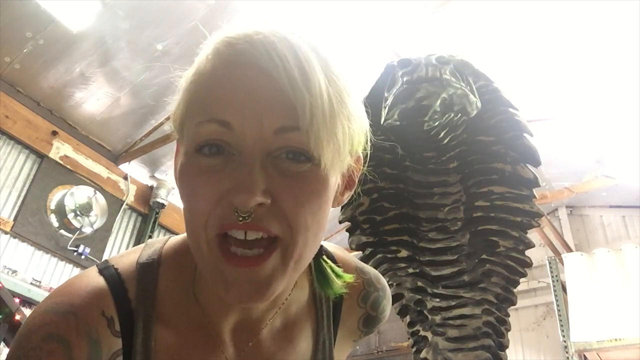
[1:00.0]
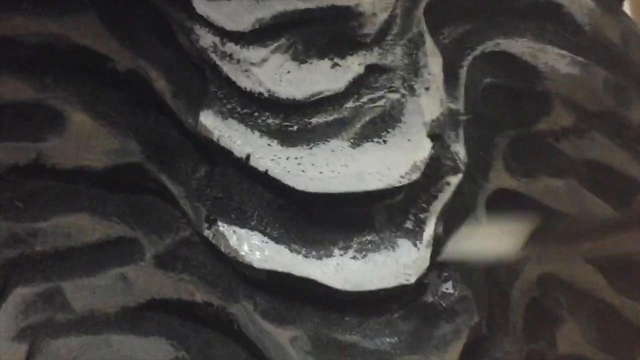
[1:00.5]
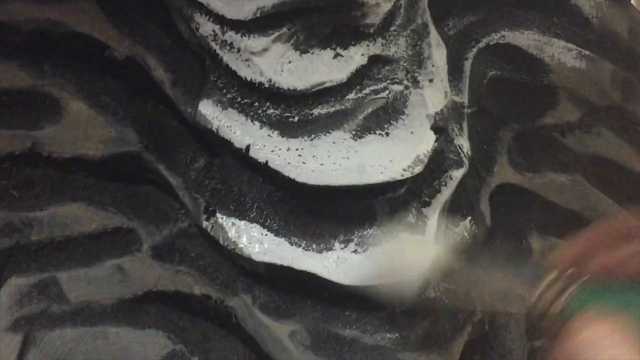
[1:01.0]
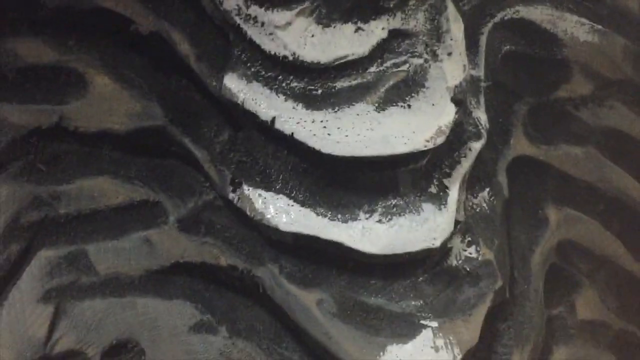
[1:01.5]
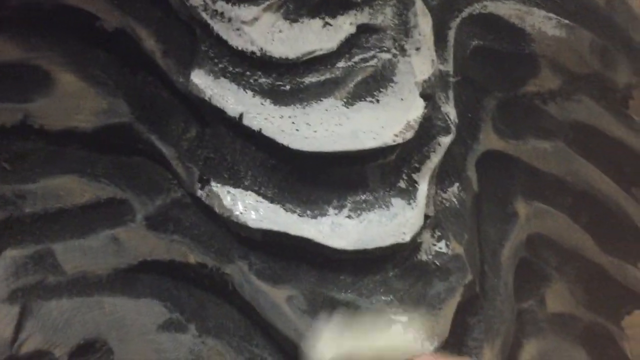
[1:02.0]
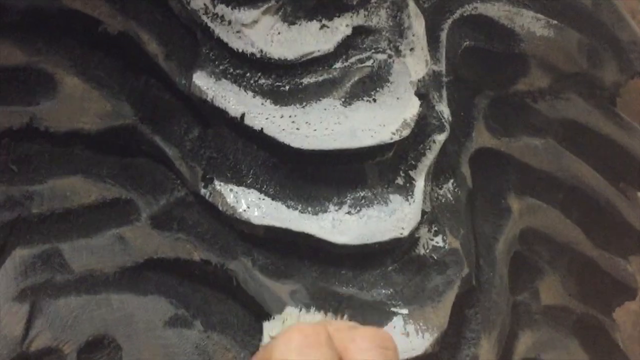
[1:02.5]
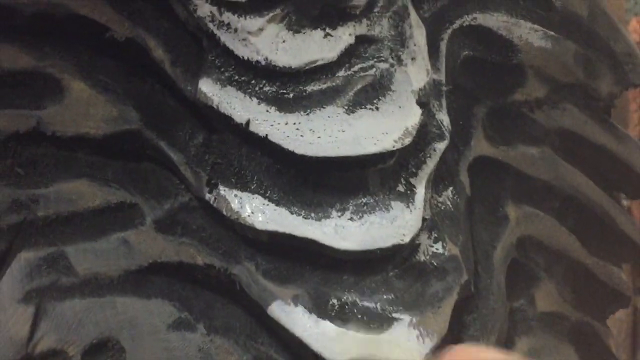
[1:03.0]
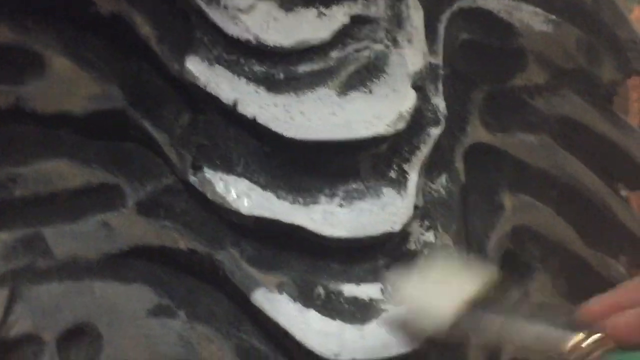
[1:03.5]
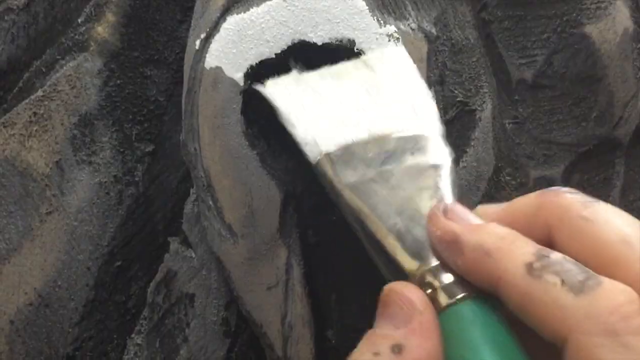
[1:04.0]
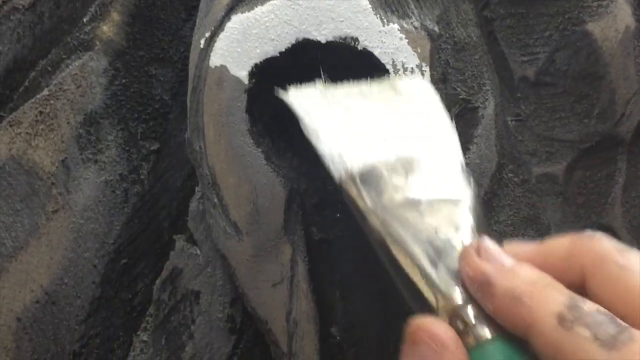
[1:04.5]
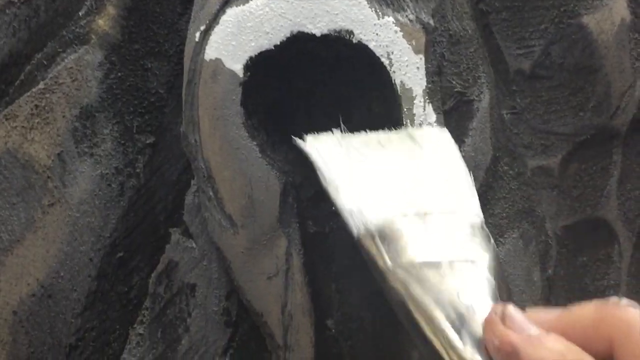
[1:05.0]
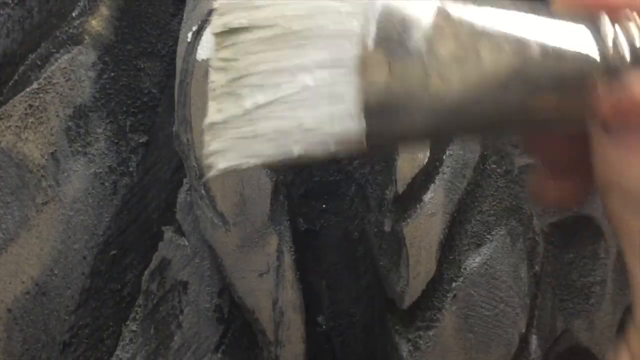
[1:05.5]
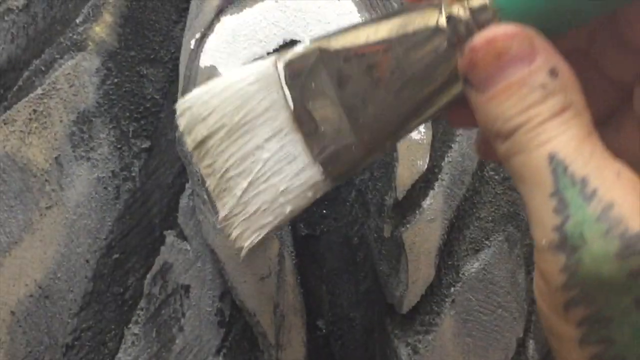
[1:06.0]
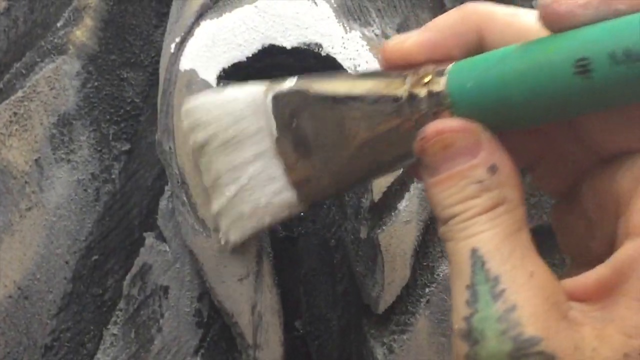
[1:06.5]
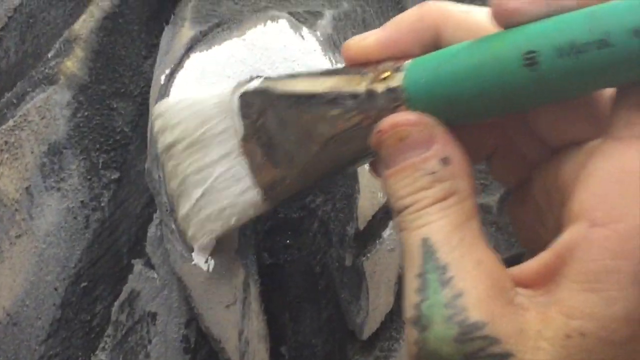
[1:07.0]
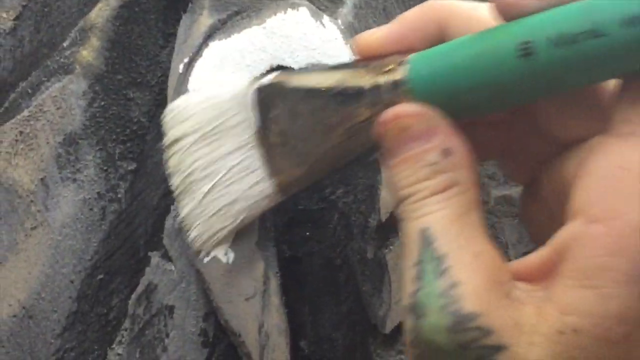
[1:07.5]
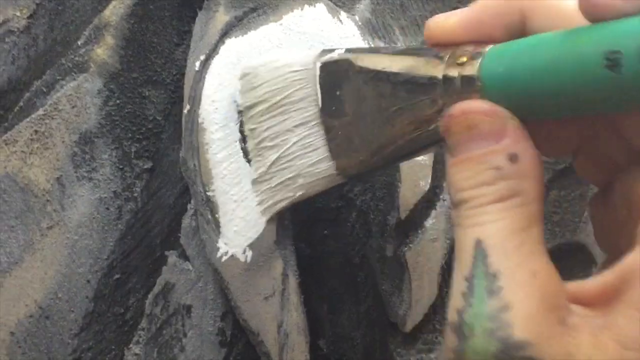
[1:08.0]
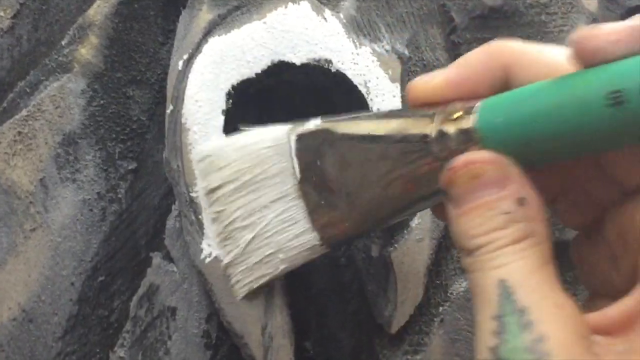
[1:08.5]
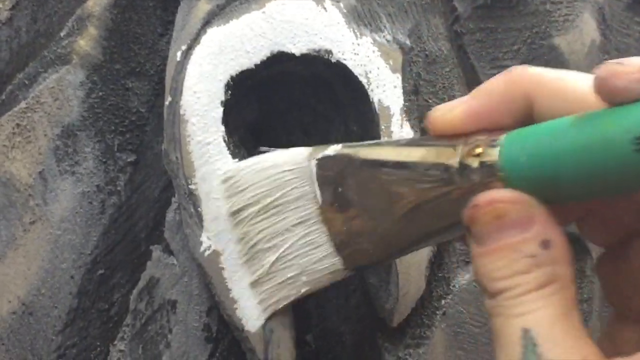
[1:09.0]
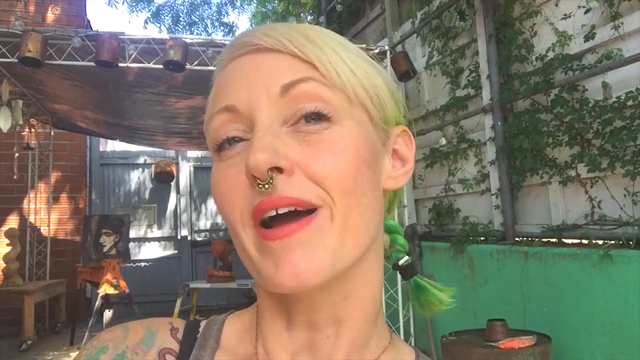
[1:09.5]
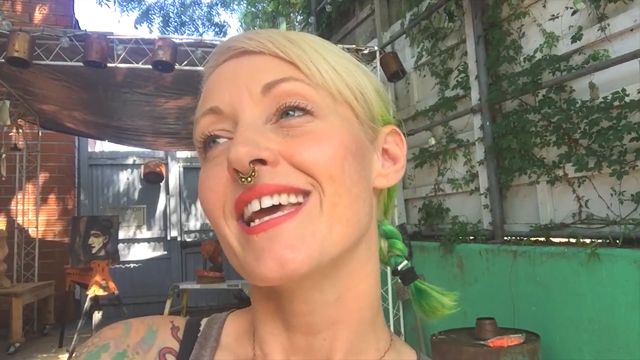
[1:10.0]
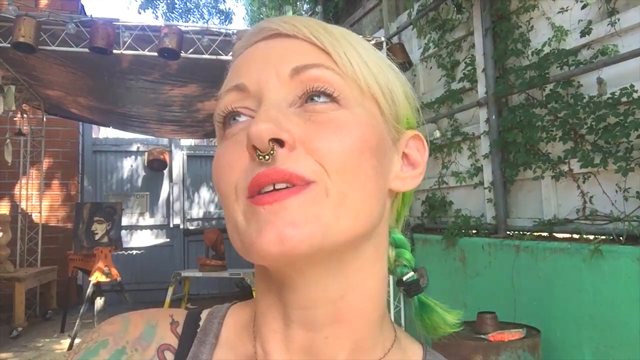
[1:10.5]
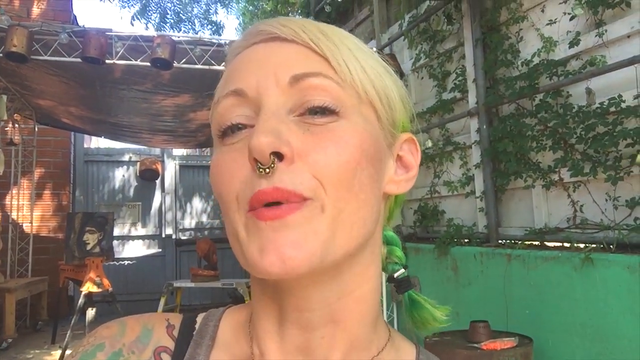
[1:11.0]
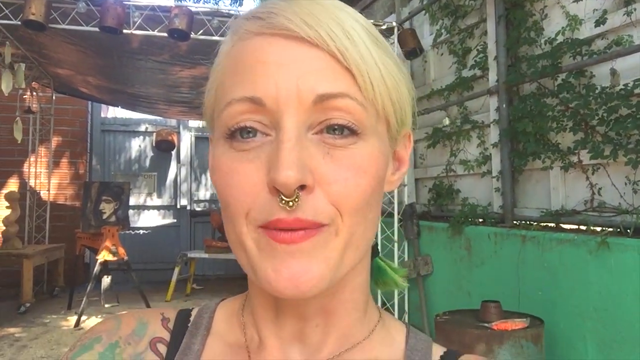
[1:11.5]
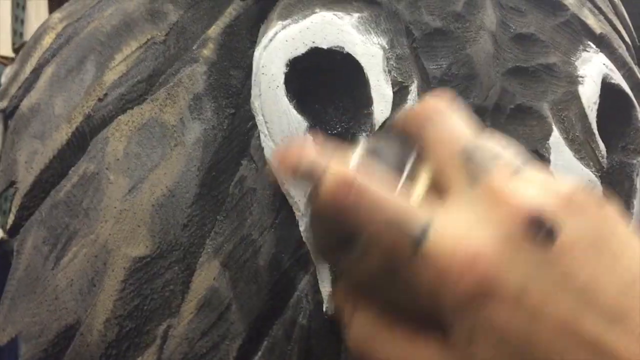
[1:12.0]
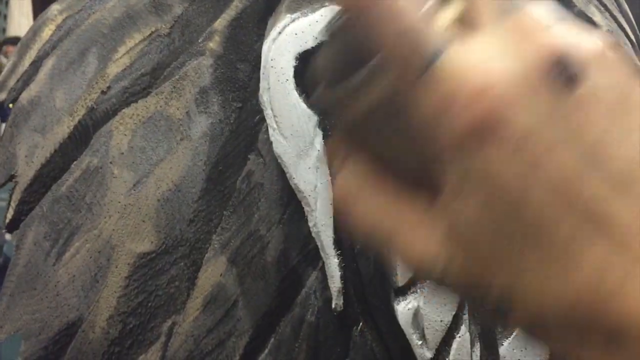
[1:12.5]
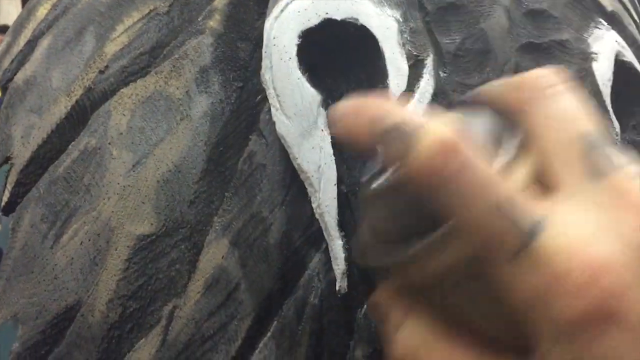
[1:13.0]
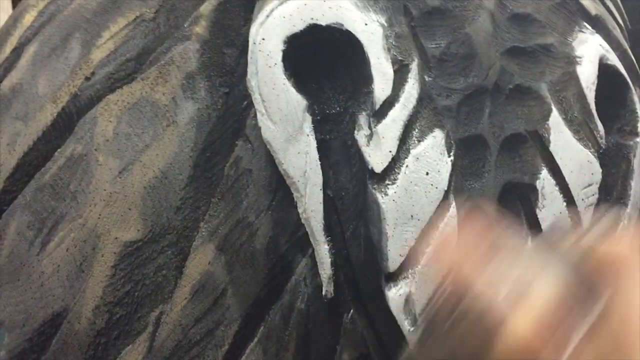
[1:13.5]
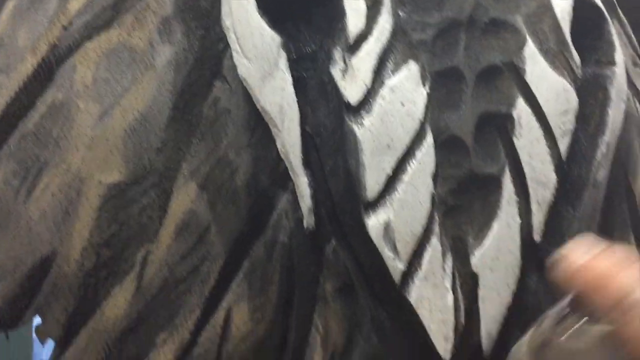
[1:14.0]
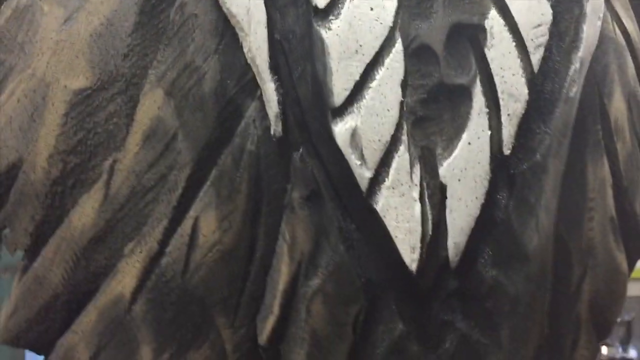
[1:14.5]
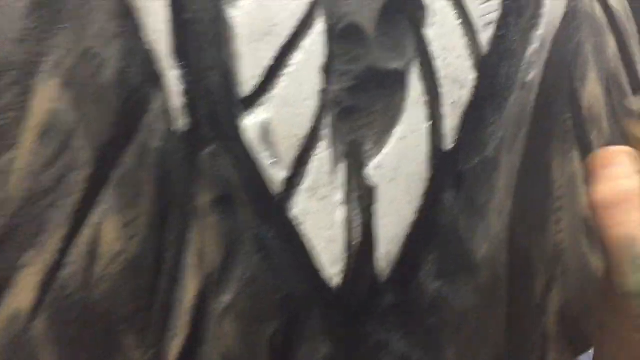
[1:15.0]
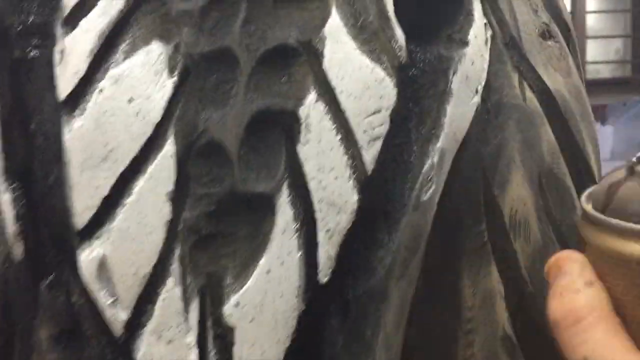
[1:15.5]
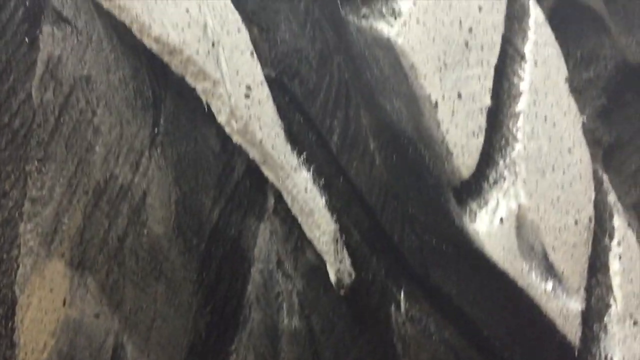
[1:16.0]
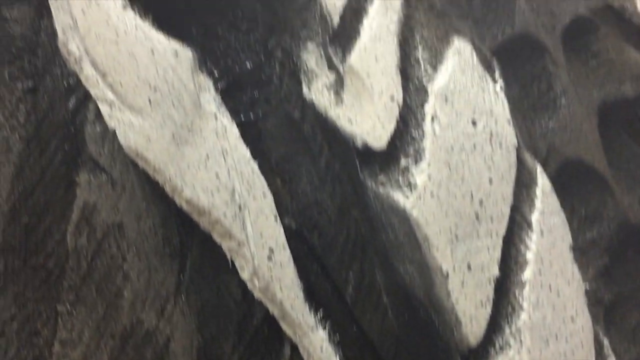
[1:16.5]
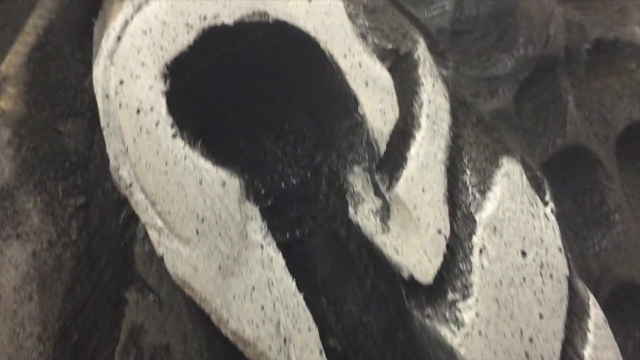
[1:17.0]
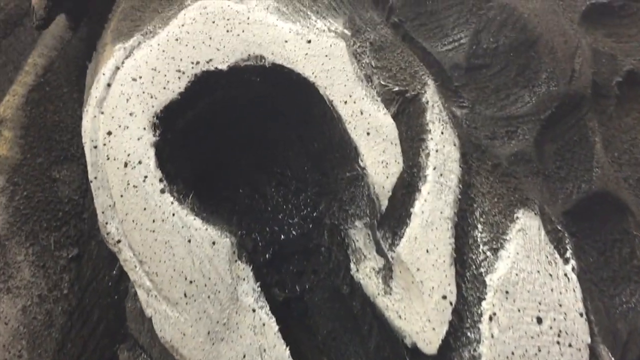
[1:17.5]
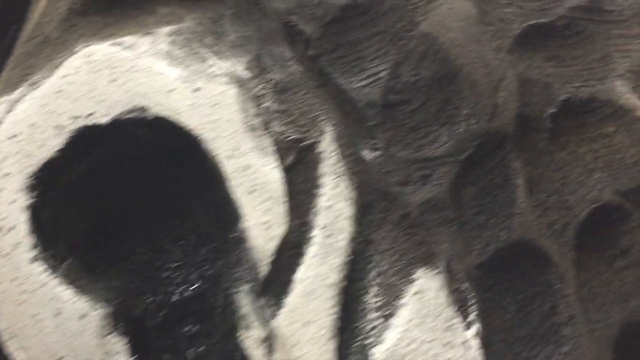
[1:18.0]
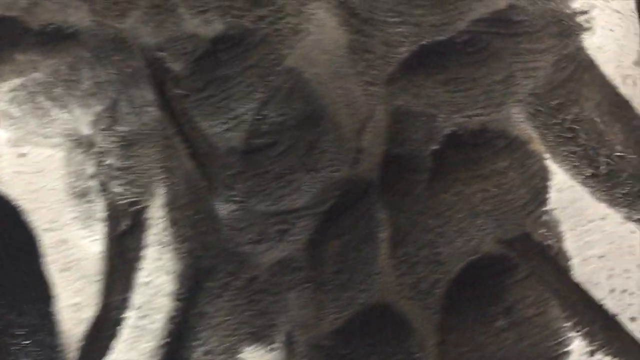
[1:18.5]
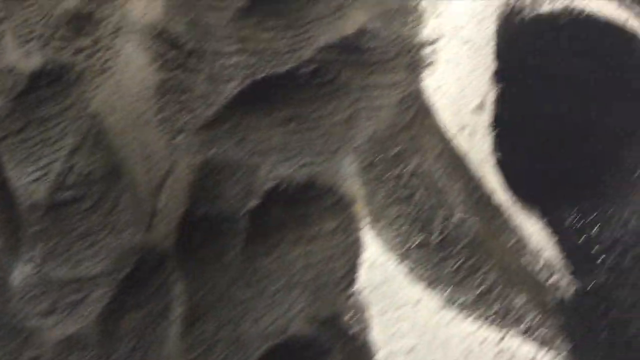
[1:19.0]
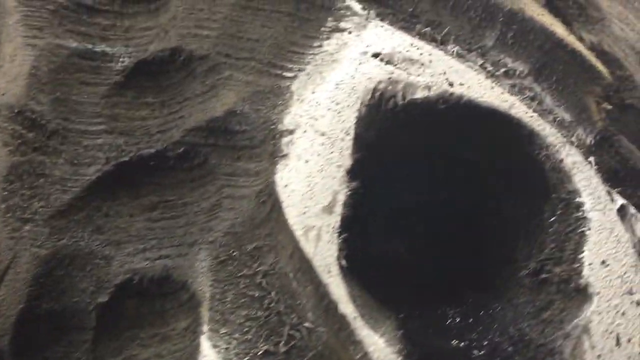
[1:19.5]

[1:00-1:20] The woman is bent down, talking to the camera. The video cuts to a very close-up shot of wood that has been painted black and is having bits of white paint added to it. The paintbrush looks to be in her right hand, and it seems to be dabbing certain parts of the sculpture, apparently to make them stand out. The hand grips the brush with the thumb underneath the handle and the forefinger and middle finger on top, painting in a dabbing motion. Her right thumb has a tattoo of a green leaf. The video cuts to the garden, where she talks, smiles, and looks upwards and to the left. It then cuts back to the sculpture, where her right hand, with tattoos on every finger, moves very fast from side to side as she spray-paints white onto the sculpture; her forefinger presses the aerosol down and her thumb is on the left side of the can. Another close-up of the figure follows.